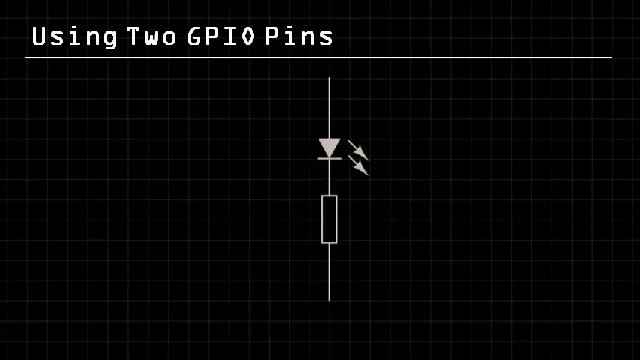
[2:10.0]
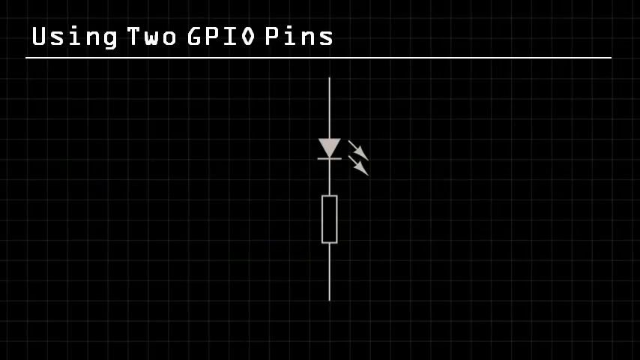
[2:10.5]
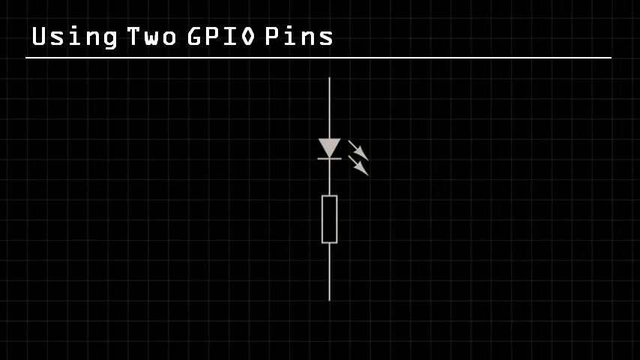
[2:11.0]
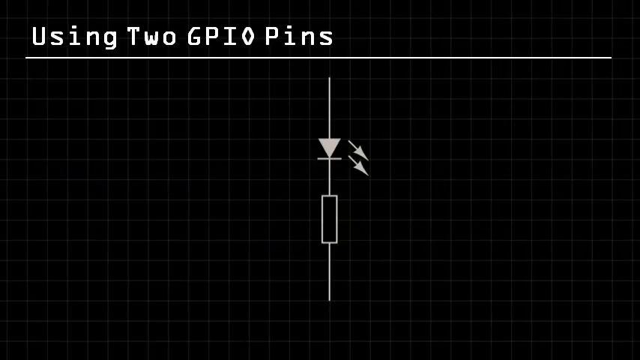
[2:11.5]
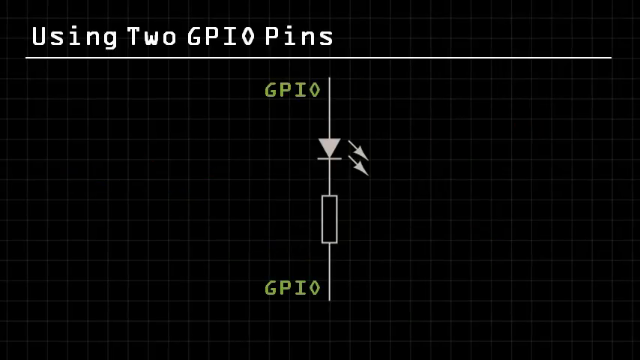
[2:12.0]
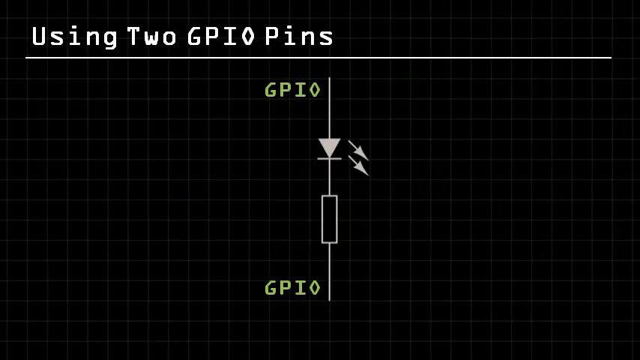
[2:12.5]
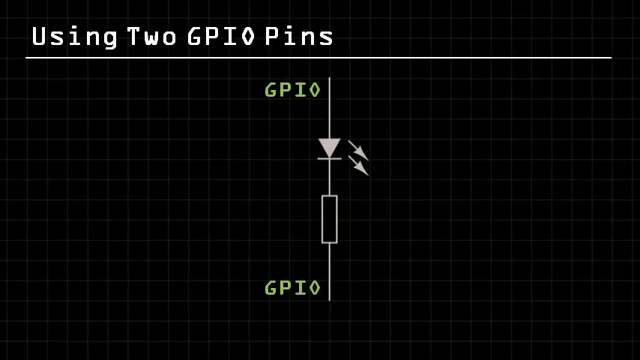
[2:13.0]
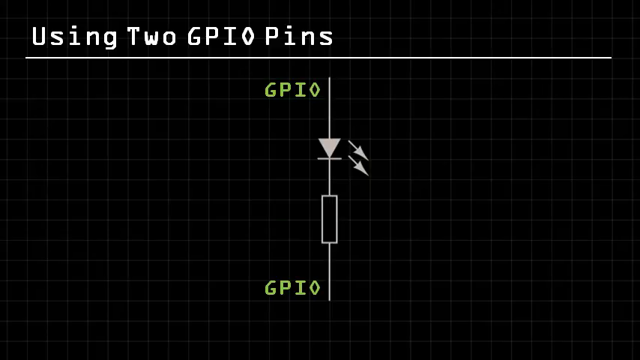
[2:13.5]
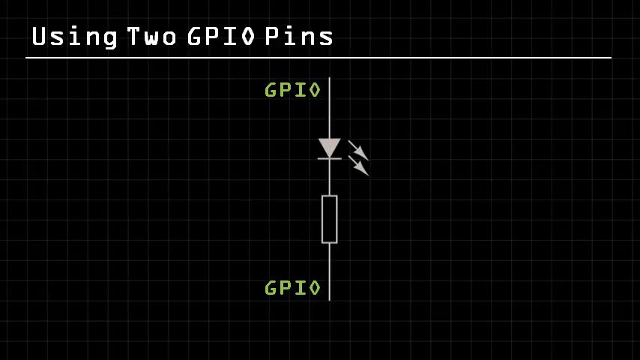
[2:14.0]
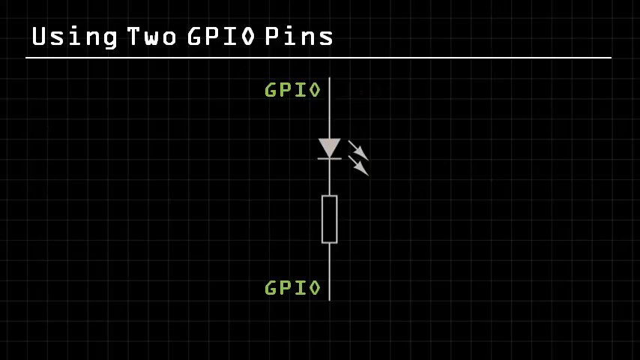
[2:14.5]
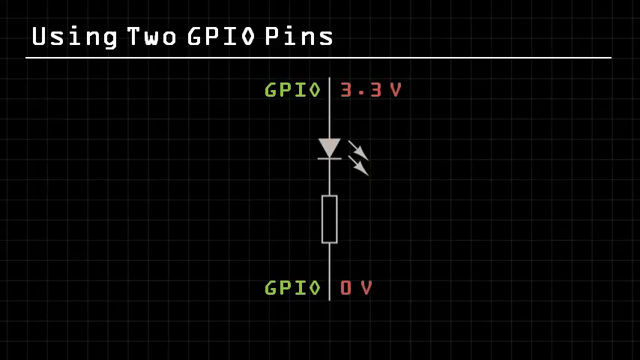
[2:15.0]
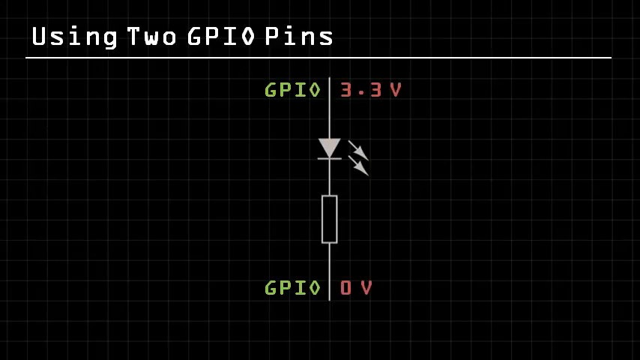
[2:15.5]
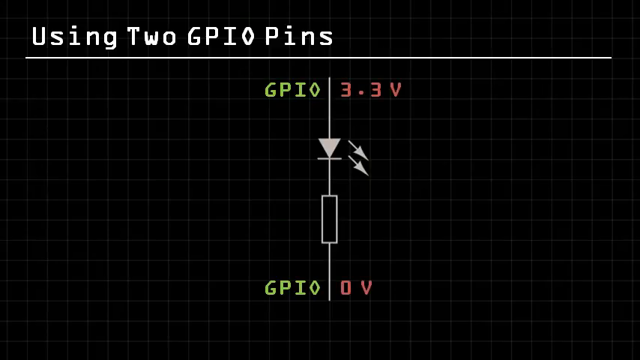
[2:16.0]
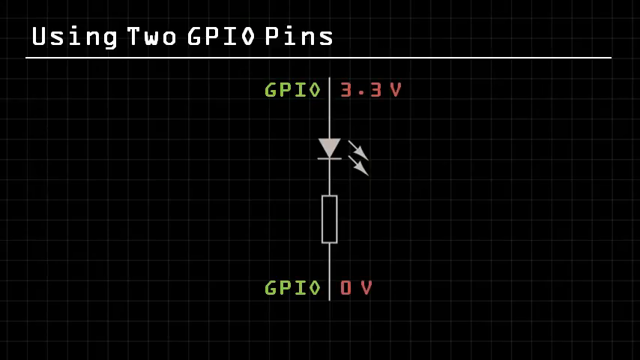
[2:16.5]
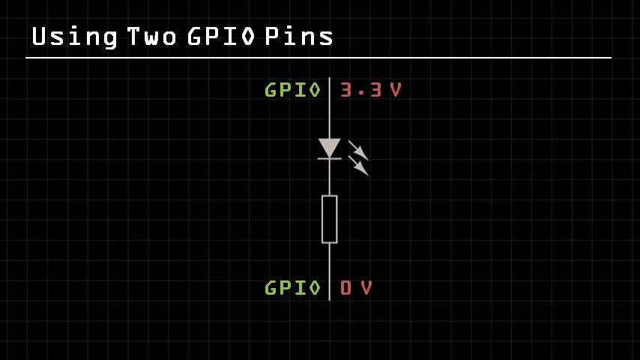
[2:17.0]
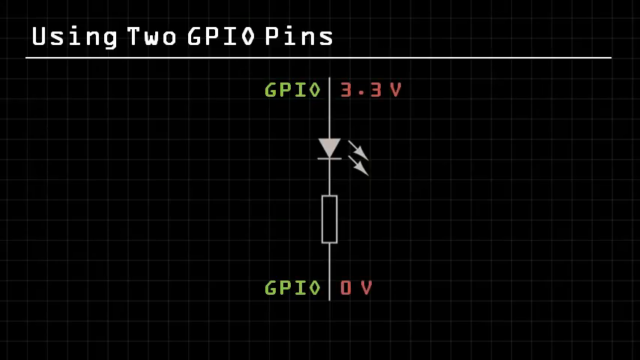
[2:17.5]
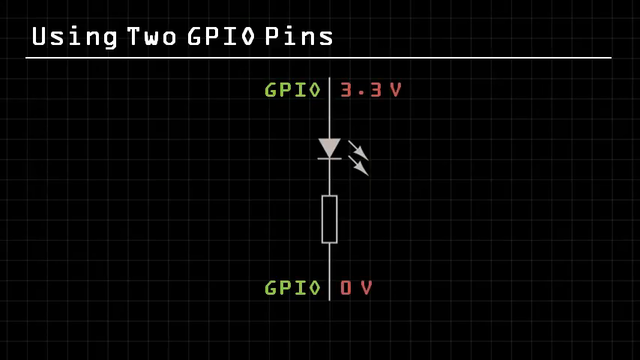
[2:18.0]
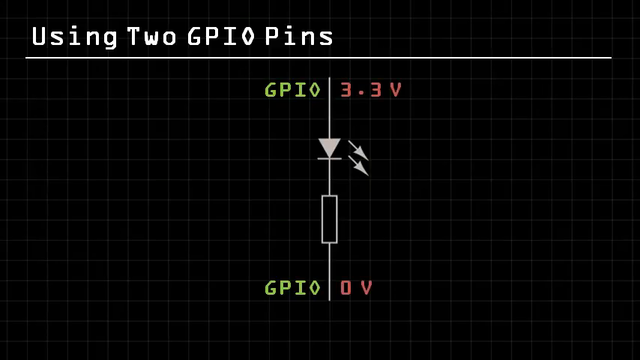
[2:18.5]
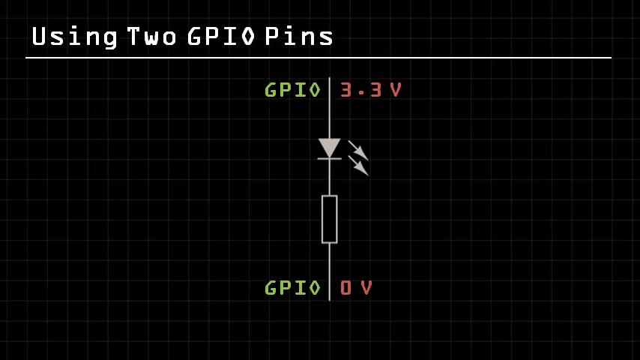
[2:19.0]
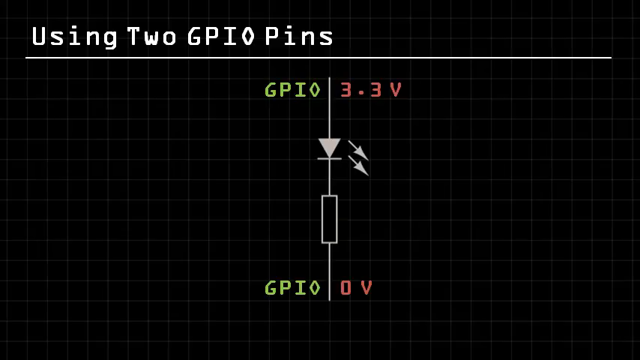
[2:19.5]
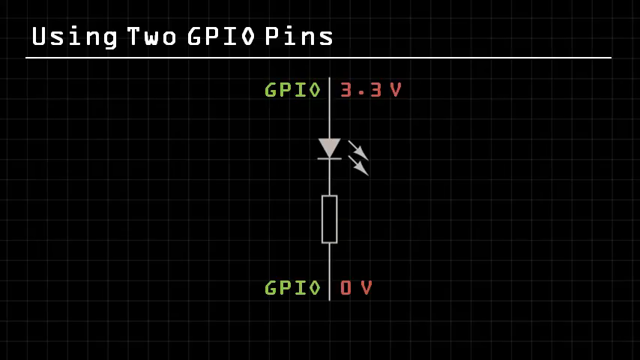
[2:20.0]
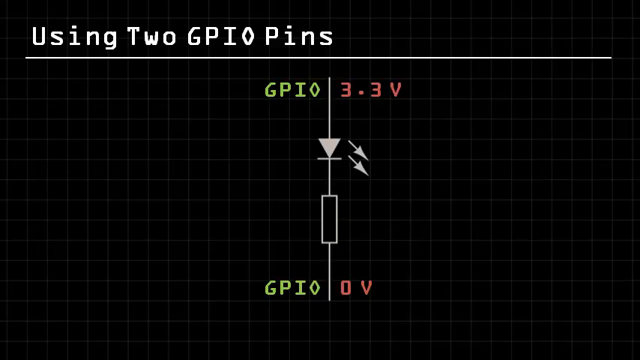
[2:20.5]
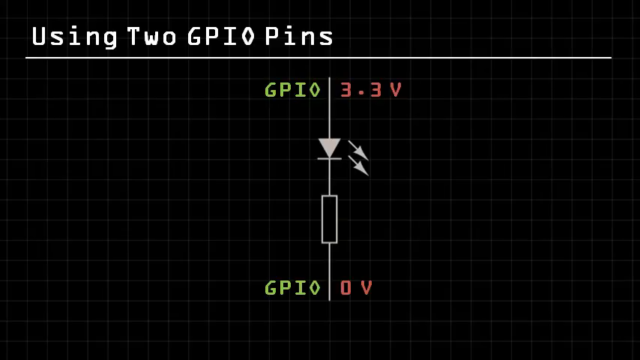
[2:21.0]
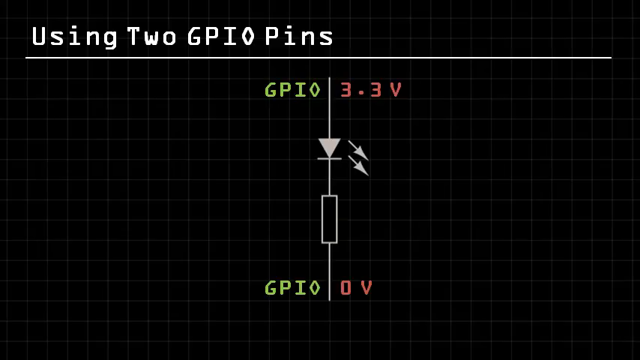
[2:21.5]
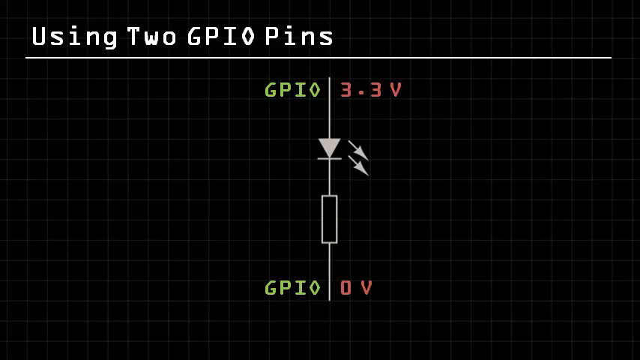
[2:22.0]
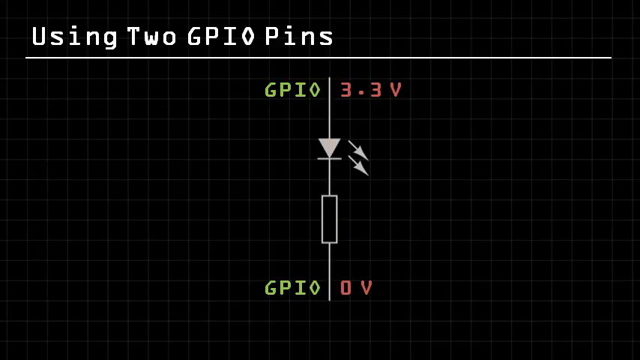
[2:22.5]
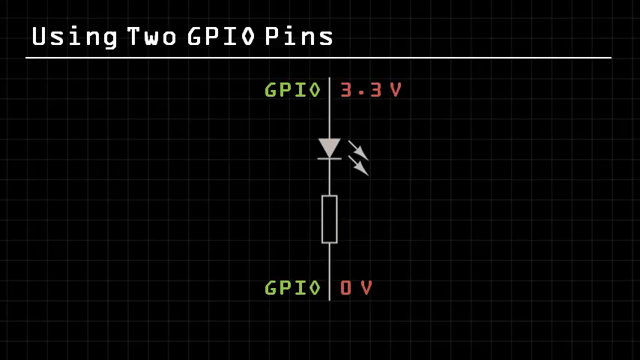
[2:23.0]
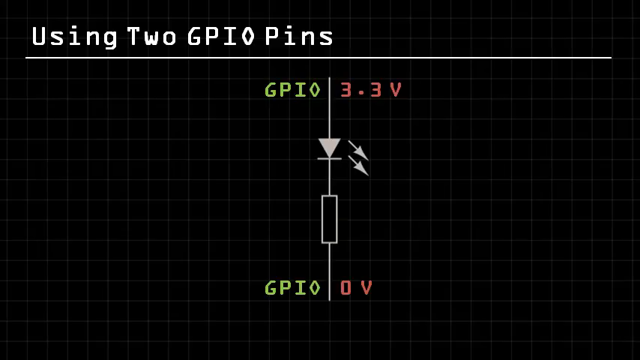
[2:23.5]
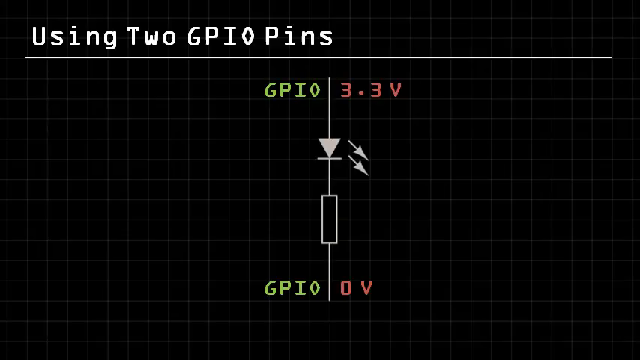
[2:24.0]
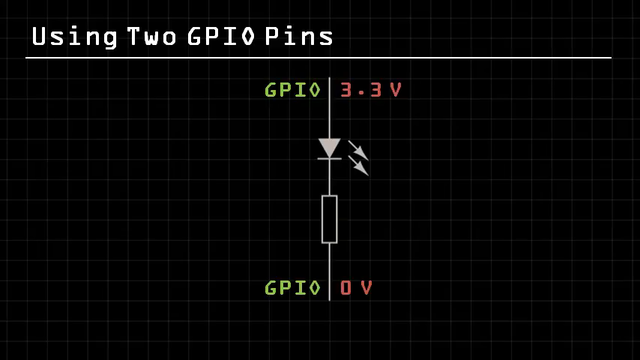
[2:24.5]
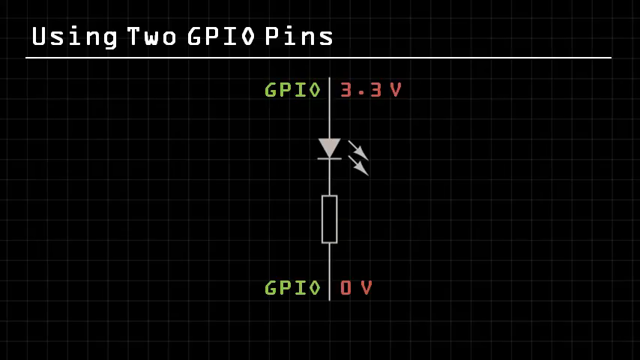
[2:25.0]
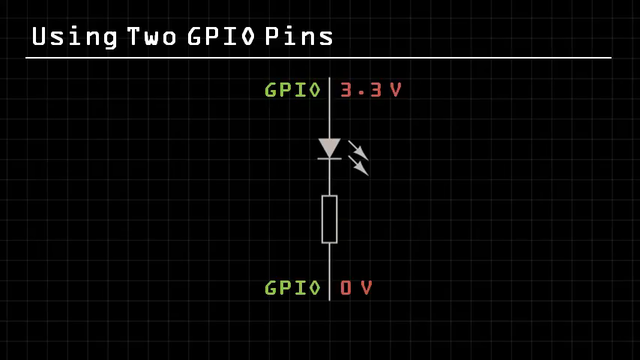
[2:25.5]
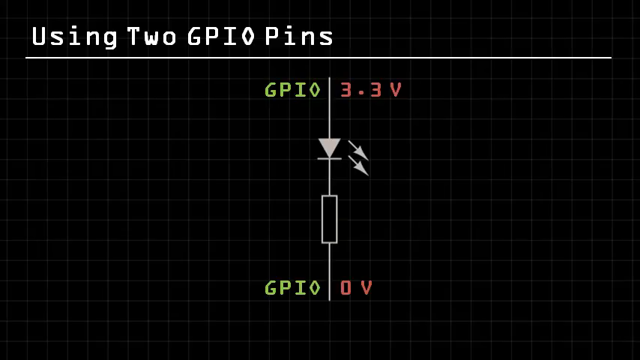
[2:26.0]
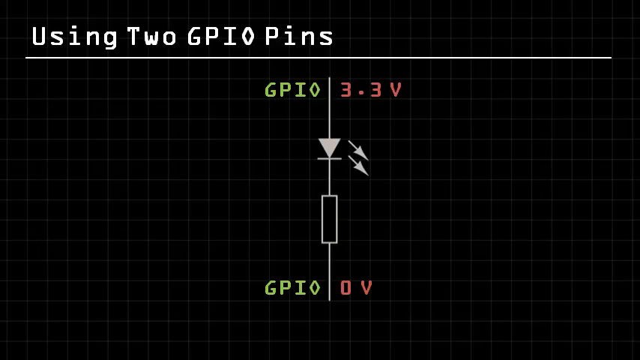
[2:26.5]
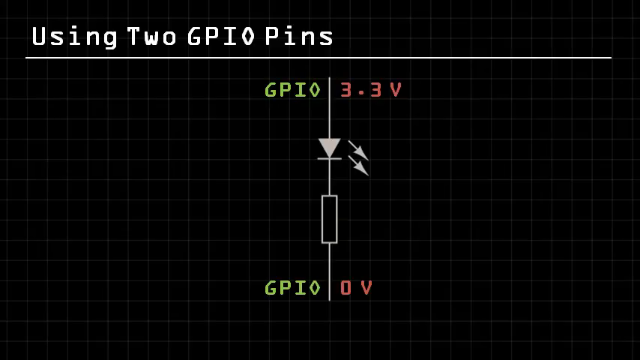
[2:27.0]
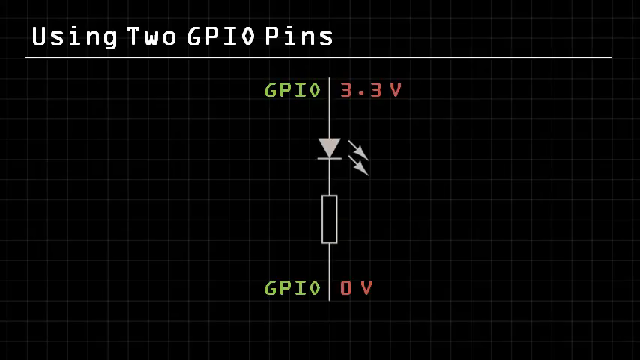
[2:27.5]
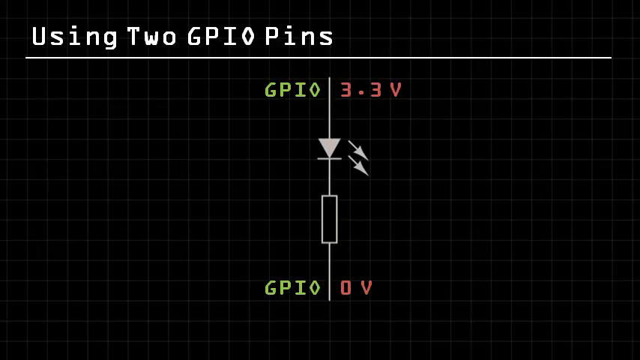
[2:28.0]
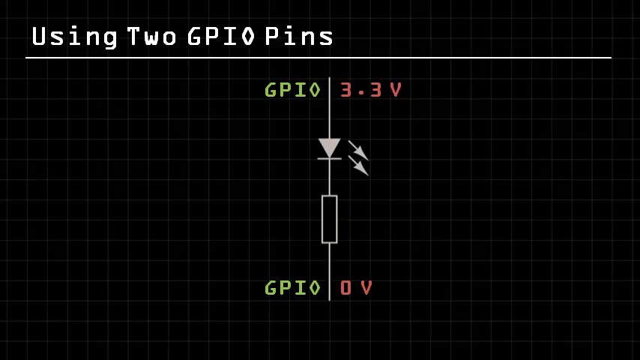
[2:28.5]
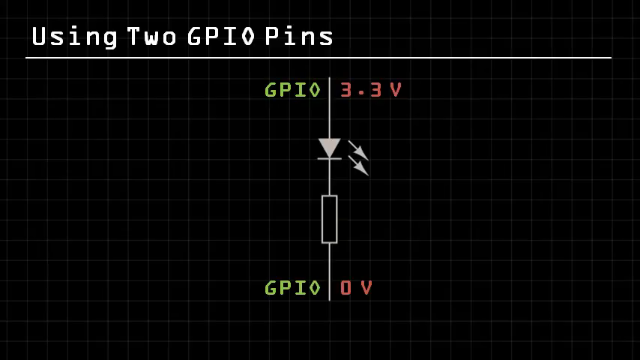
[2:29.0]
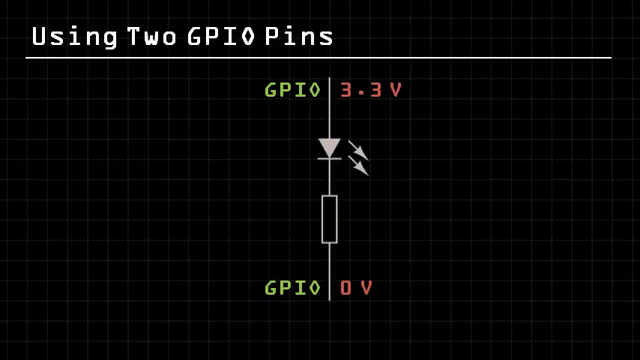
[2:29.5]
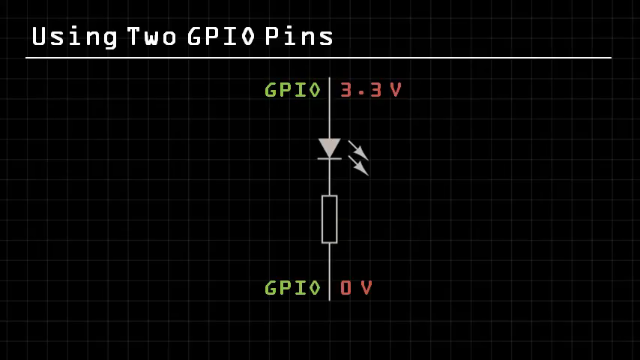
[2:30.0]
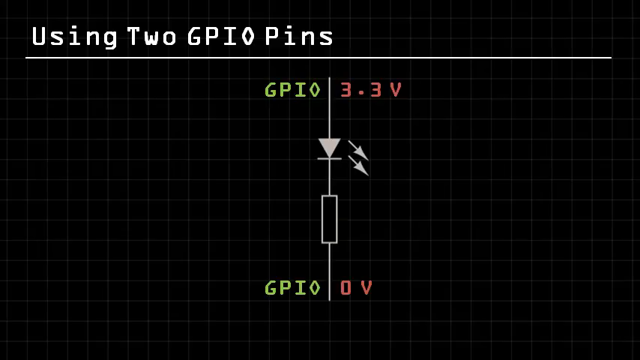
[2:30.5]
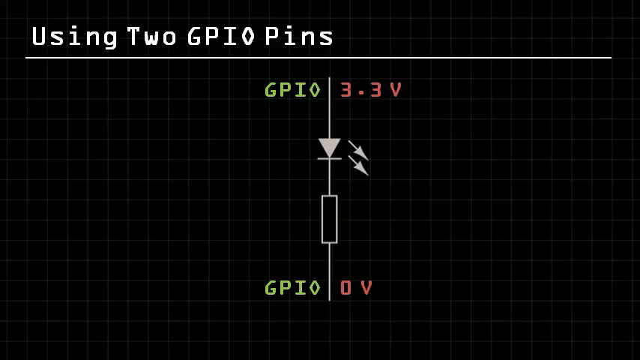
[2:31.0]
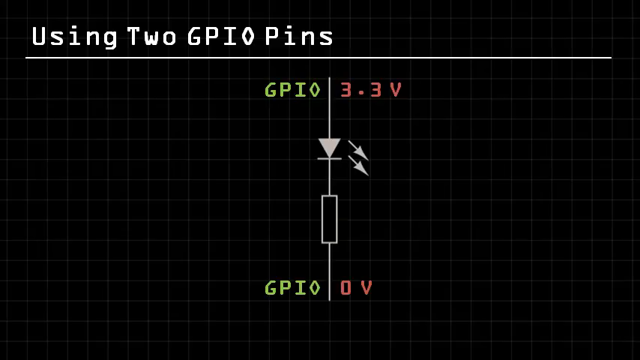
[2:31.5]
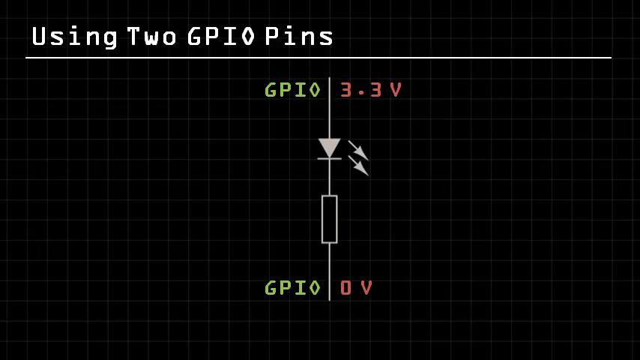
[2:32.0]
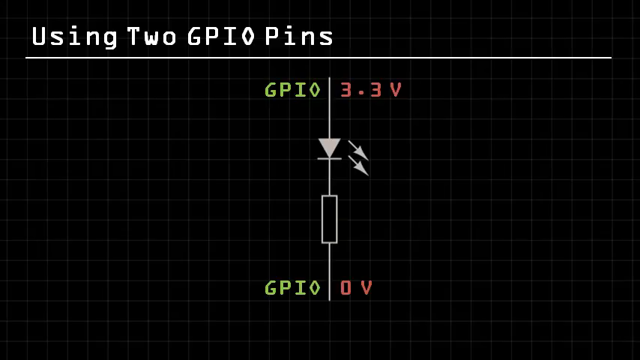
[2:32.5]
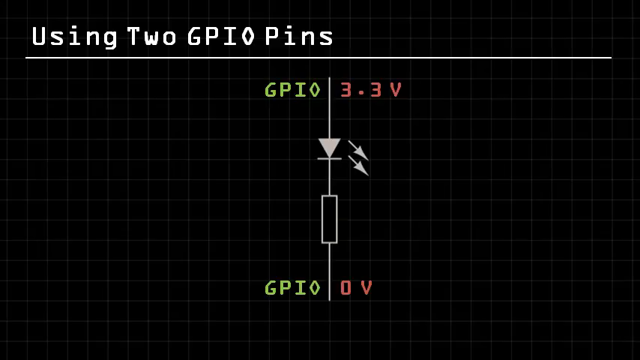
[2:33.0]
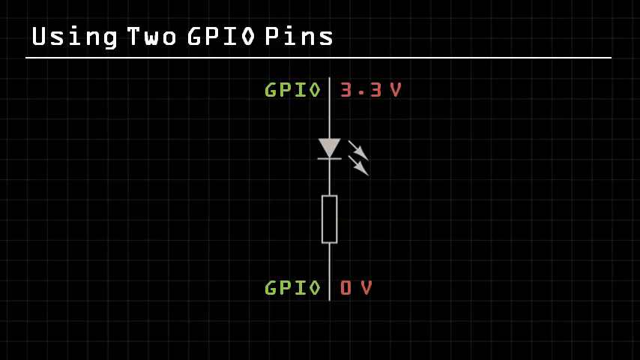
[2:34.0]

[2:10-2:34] The last diagram disappears and another appears, with text at the top labeling it "Using two GPIO pins". The diagram looks very similar to the earlier ones: a vertical line coming into a triangle facing down, a horizontal line attached to the tip of the triangle, and two arrows coming off to the right, angling down. The vertical line continues from the triangle down into the rectangle, which is hollow, and continues on the other side of it. The top says "GPIO" in green and "3.3V" in red; the bottom says "GPIO" in green and "0V" in red. This diagram stays on screen and nothing changes beyond that.